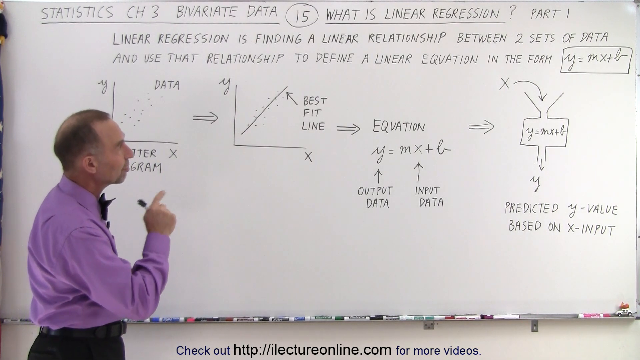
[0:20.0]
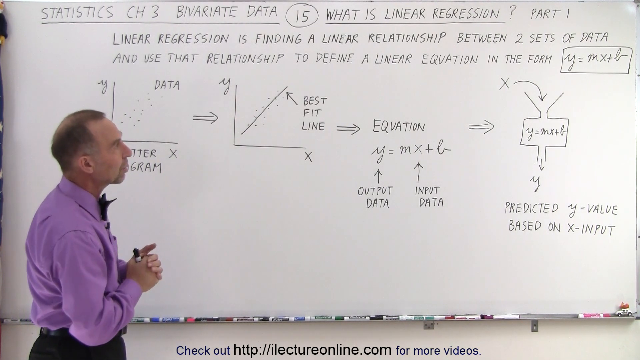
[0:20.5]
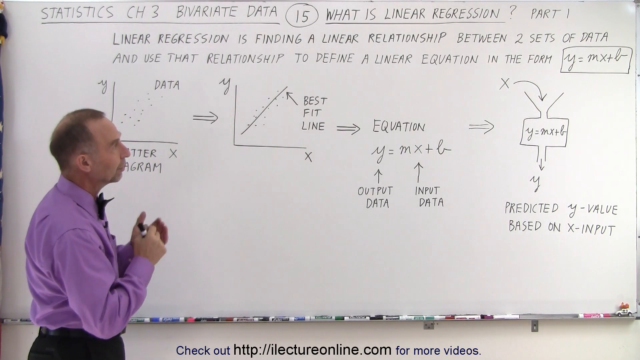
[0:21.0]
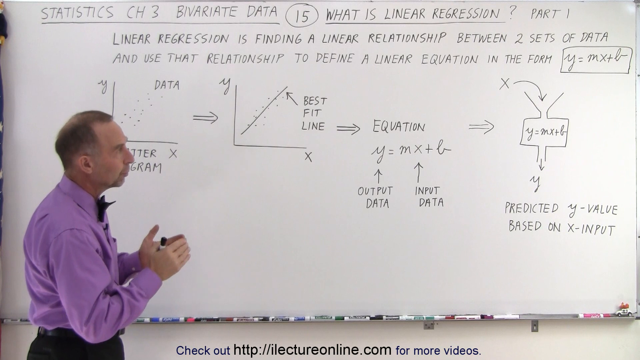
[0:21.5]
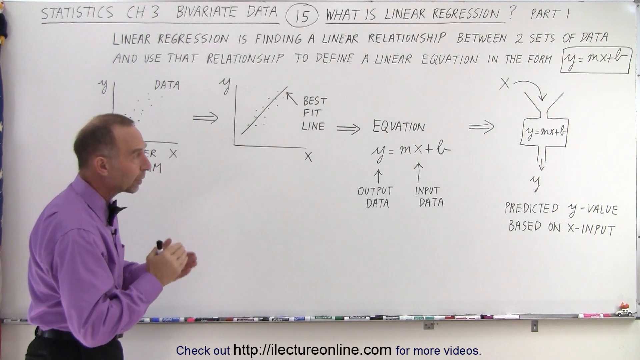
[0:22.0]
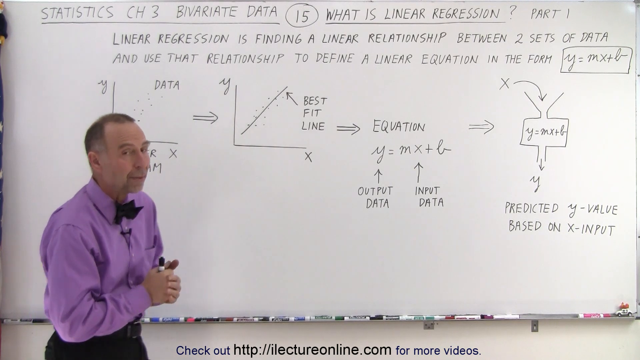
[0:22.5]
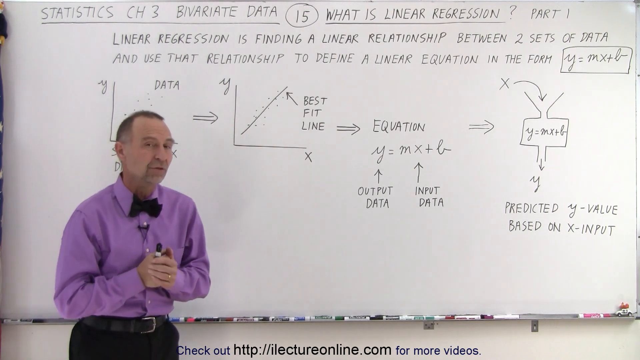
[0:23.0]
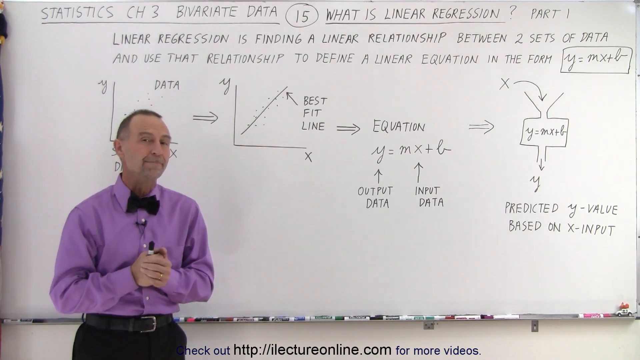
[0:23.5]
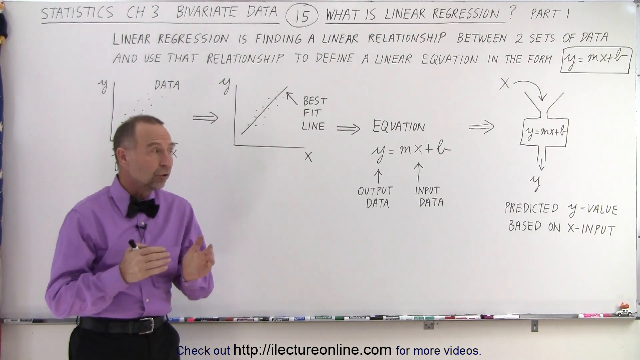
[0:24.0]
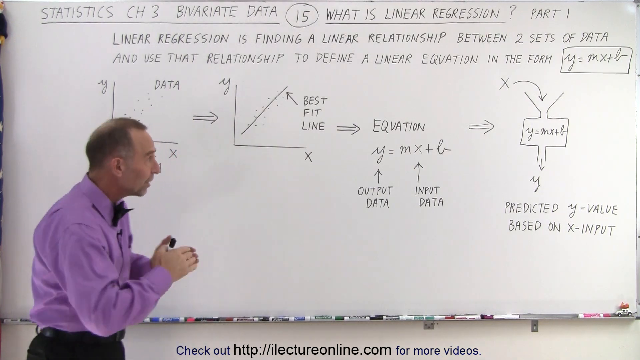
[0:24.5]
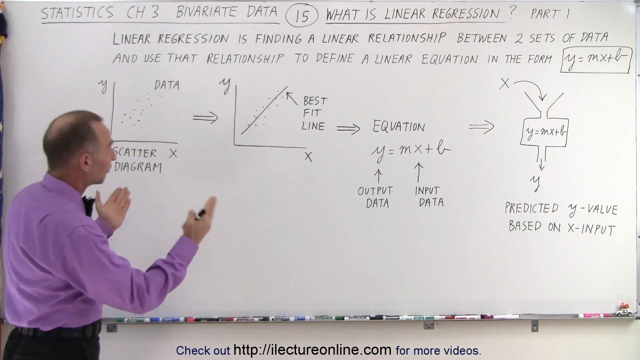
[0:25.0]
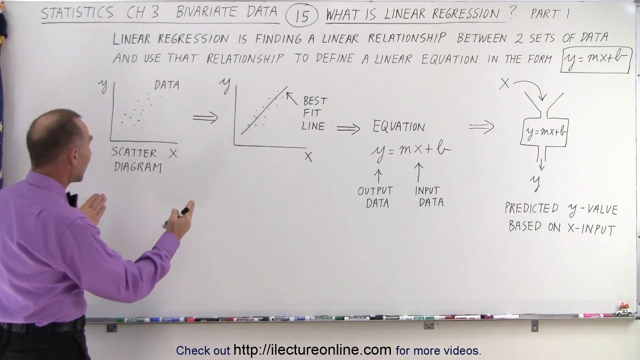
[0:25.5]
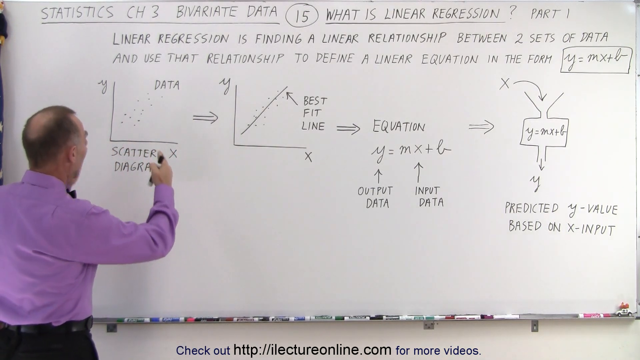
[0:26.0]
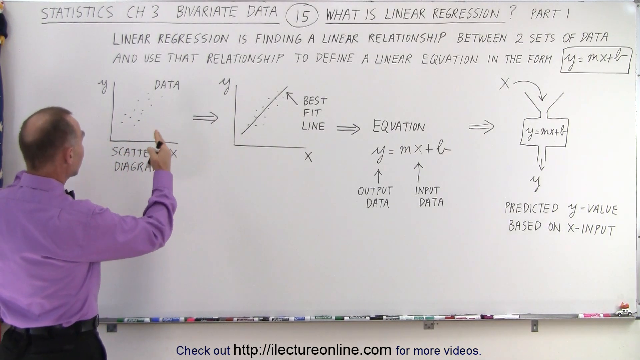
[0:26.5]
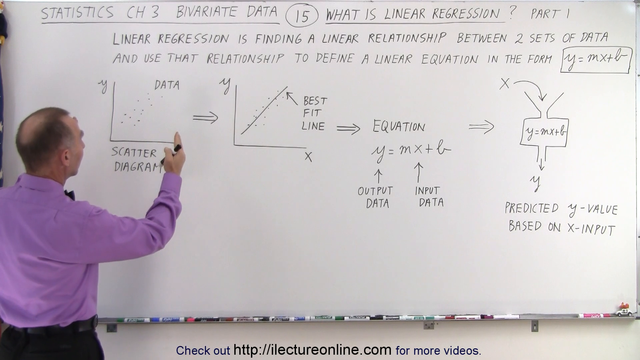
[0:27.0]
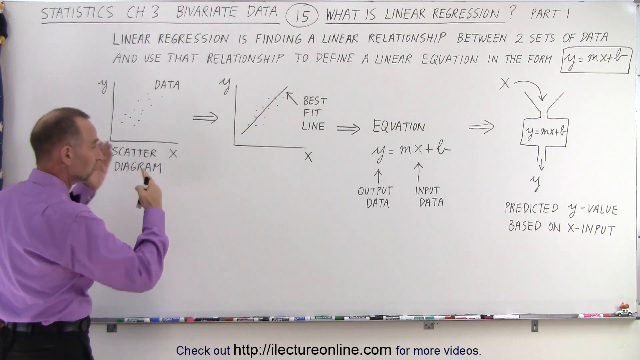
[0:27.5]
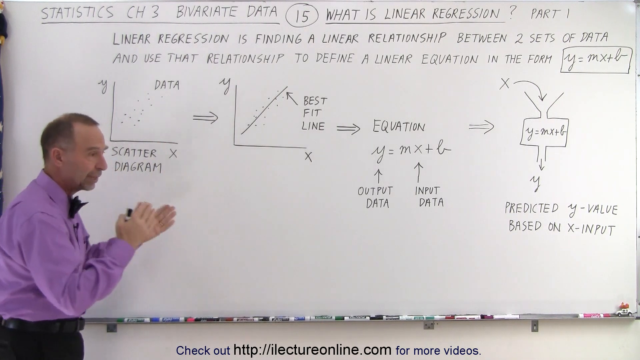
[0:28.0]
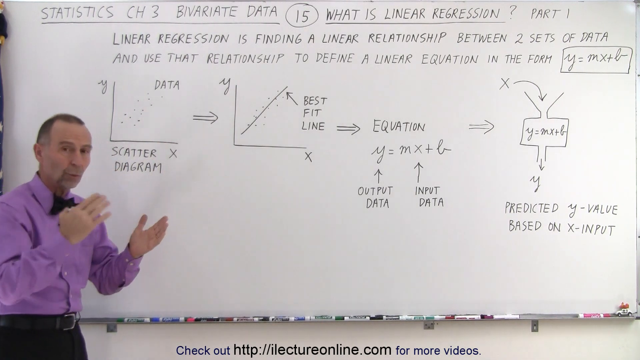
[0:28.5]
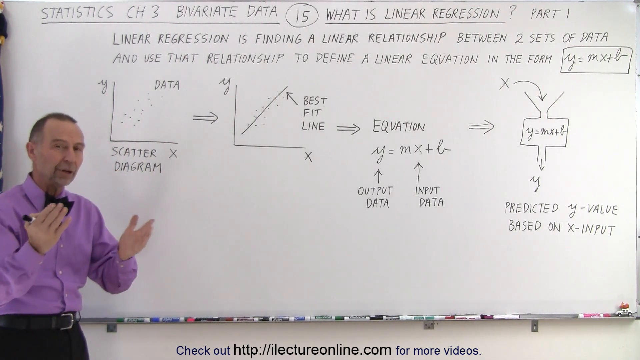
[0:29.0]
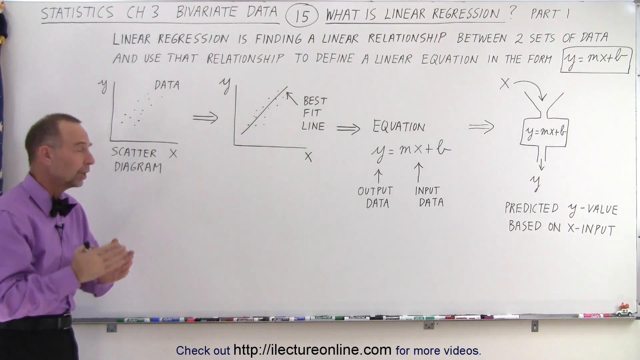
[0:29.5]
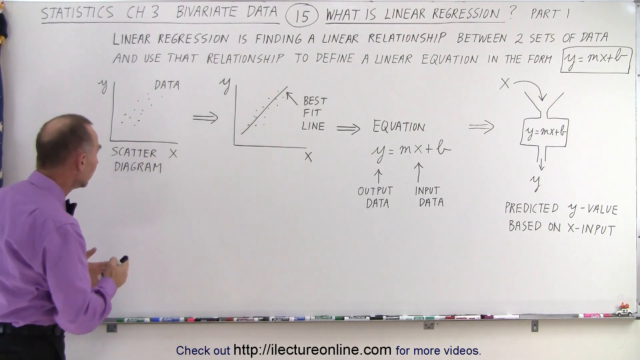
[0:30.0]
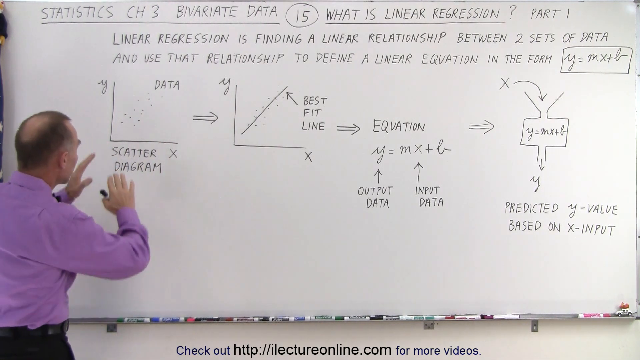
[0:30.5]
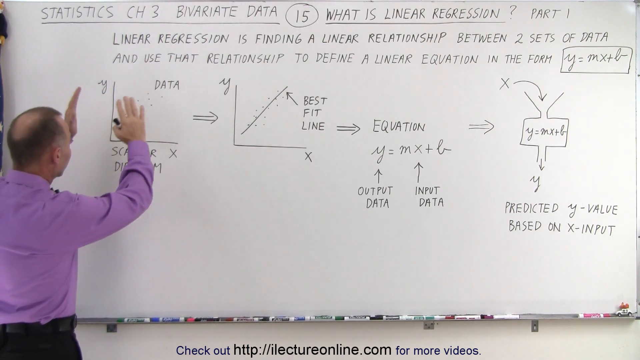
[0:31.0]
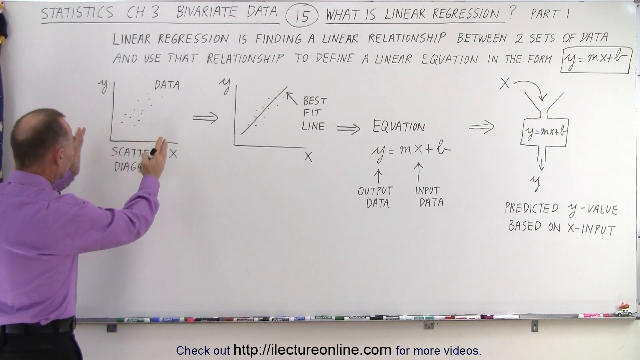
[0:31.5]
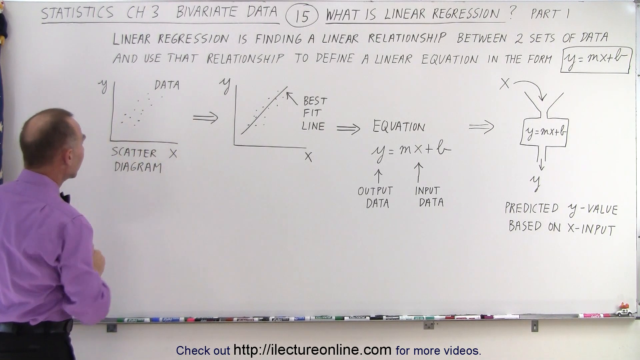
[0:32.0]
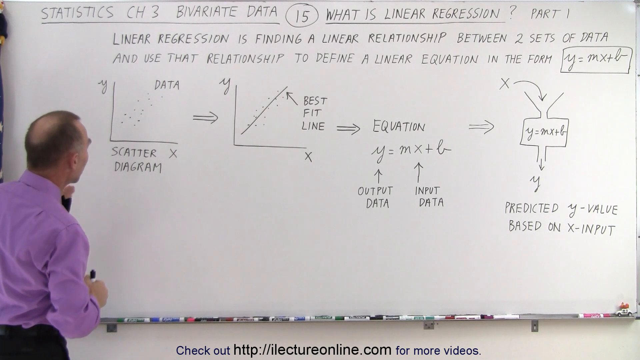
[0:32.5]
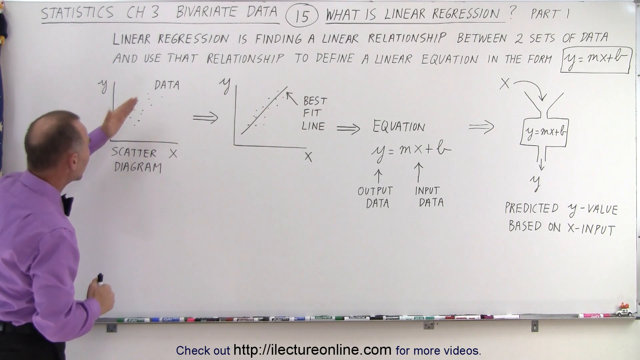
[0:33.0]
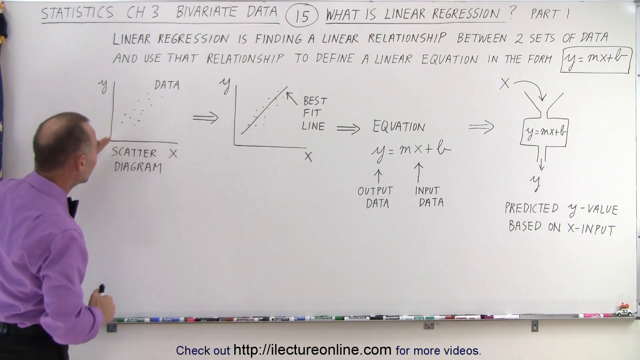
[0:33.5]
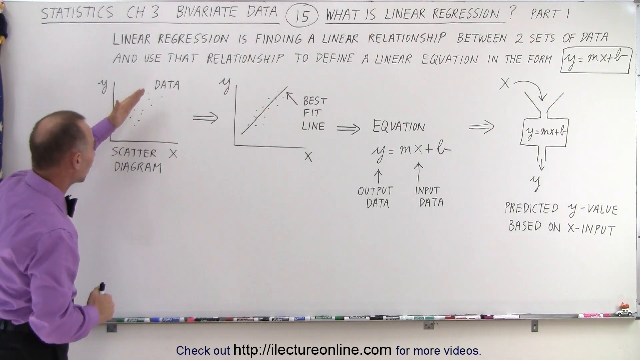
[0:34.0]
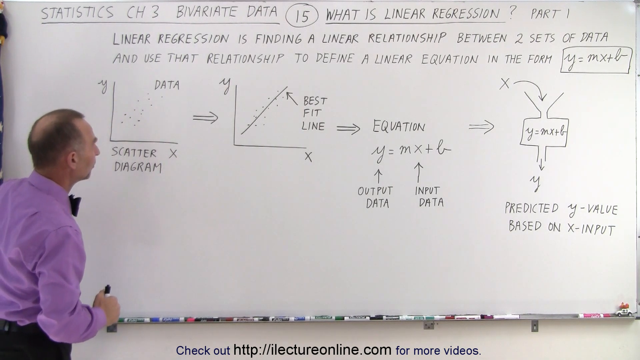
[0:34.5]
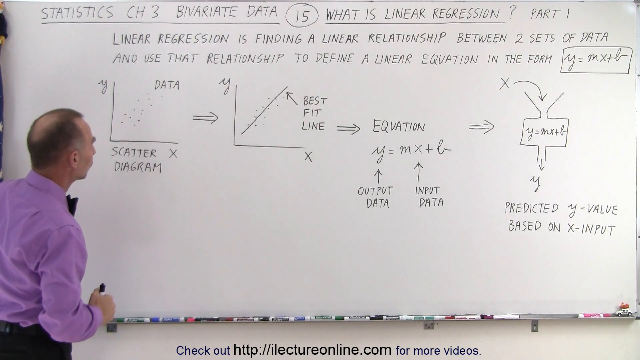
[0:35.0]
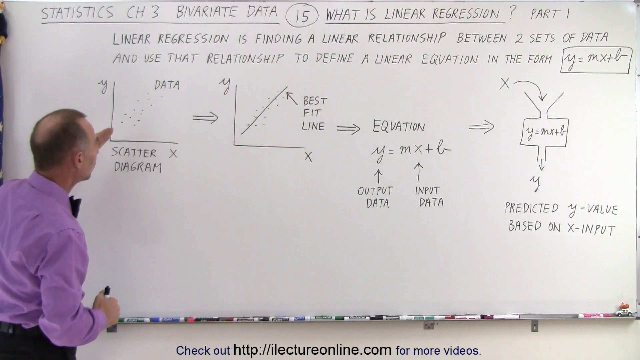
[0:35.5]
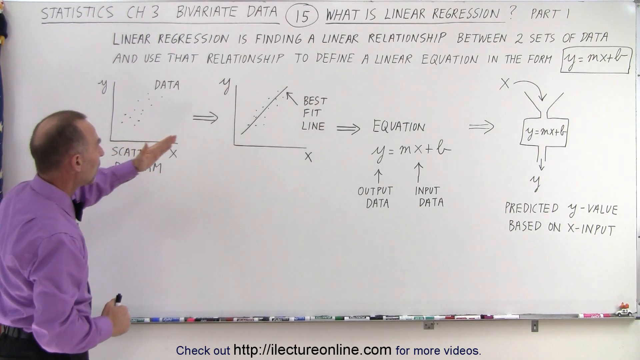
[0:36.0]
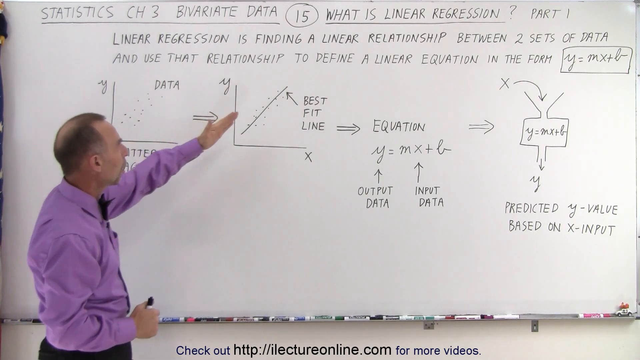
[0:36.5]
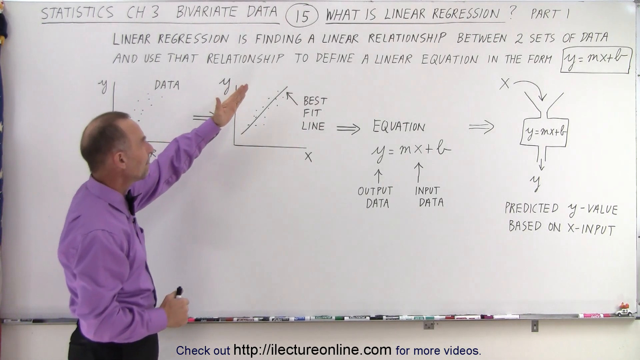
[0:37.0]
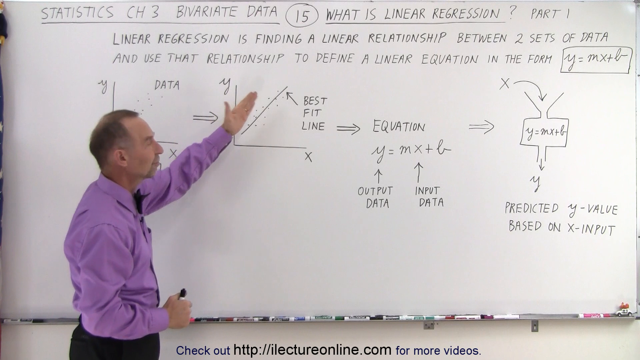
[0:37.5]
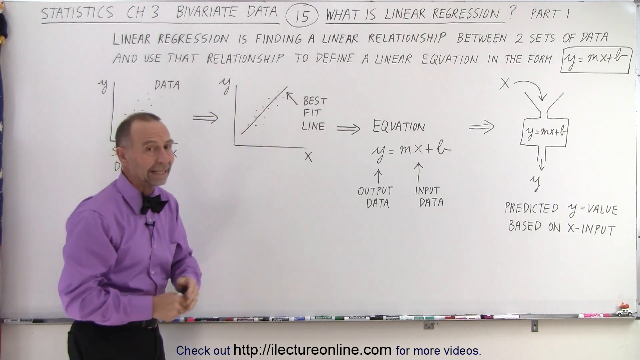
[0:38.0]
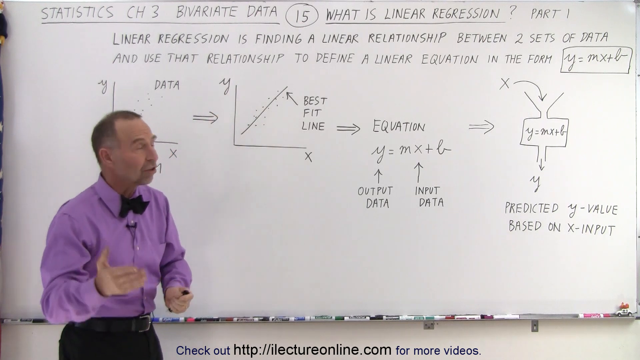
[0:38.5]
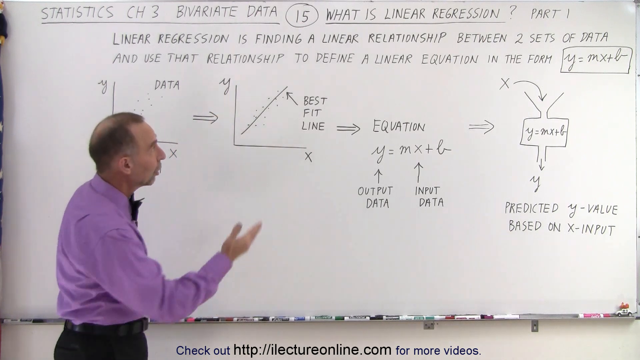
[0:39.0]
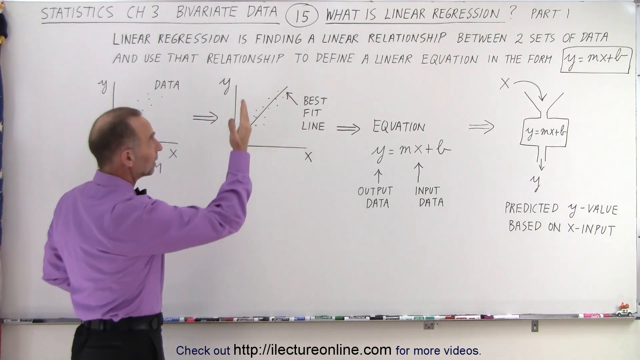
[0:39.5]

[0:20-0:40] The lecturer continues teaching the statistics written on the whiteboard. The headings read "what is a linear regression, part one," and an explanation of linear regression is written on the board in black marker. The writing seems to have been done beforehand, and he now only points by hand, step by step, through the material. The setting is unchanged, with still only one person, the male lecturer, in view. At the bottom of the video there is text directing viewers to a link below for more videos.